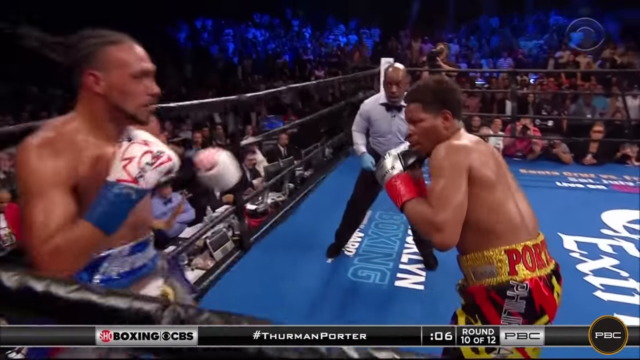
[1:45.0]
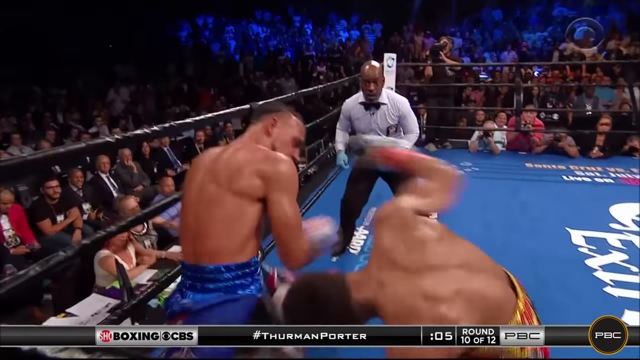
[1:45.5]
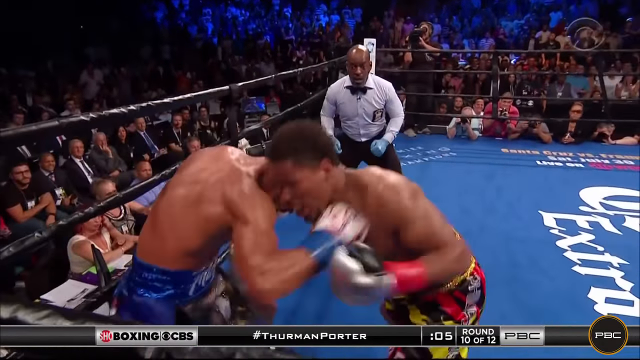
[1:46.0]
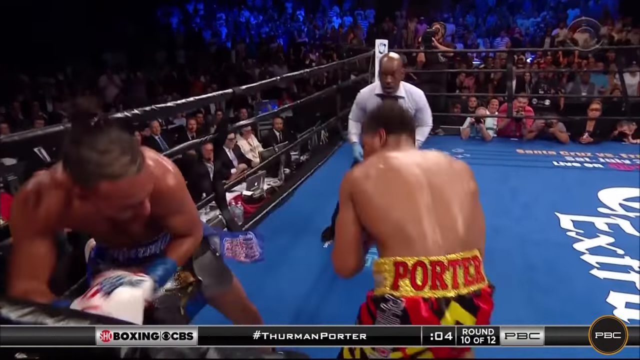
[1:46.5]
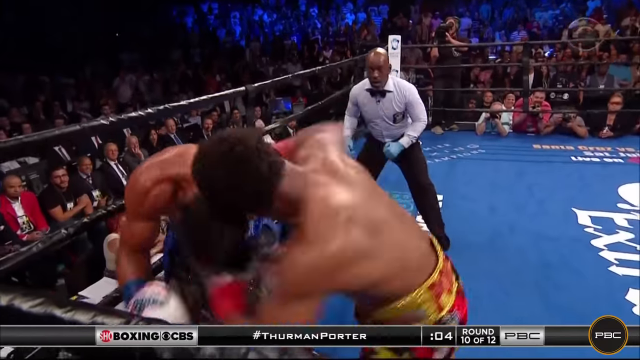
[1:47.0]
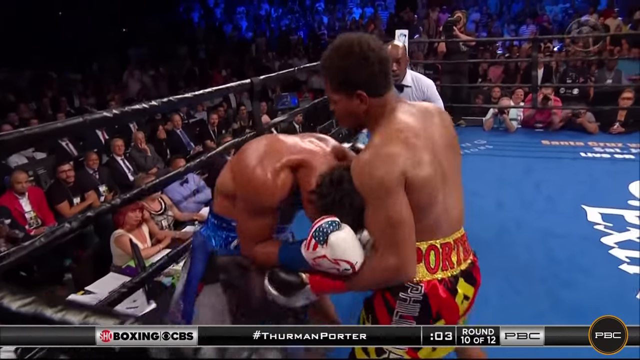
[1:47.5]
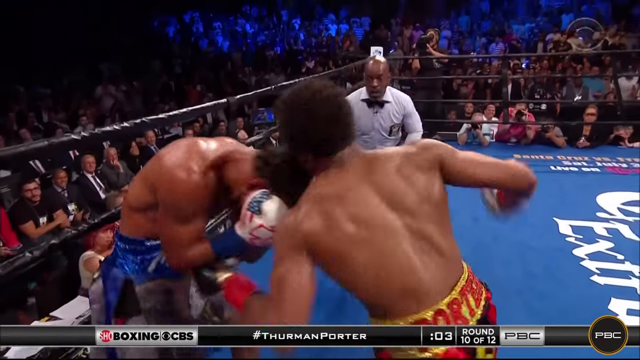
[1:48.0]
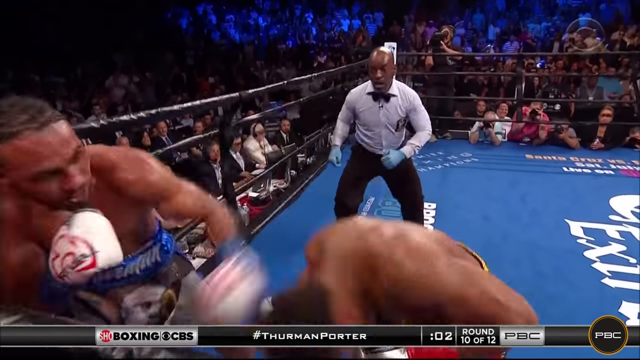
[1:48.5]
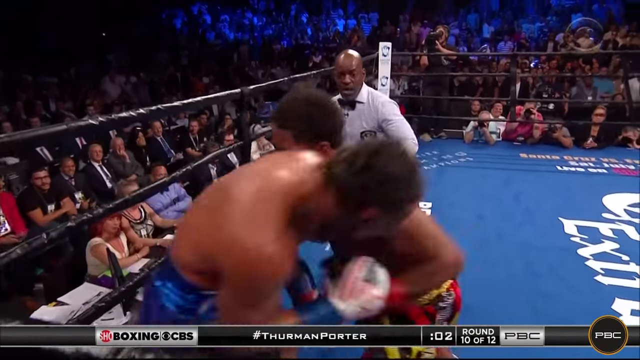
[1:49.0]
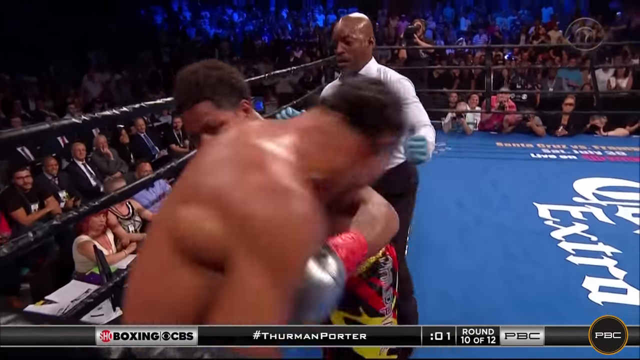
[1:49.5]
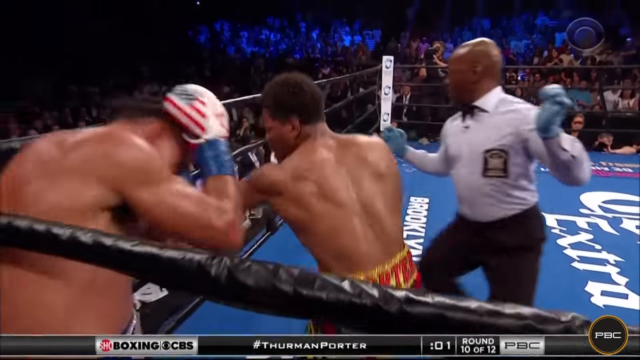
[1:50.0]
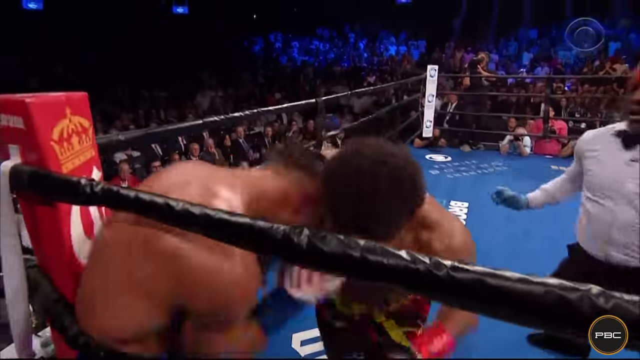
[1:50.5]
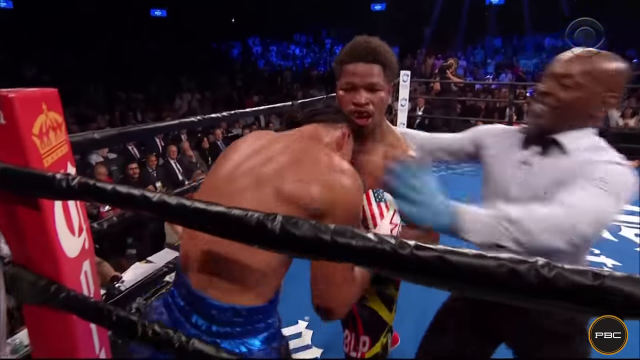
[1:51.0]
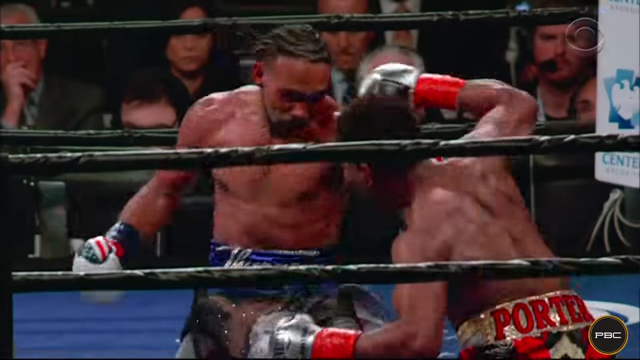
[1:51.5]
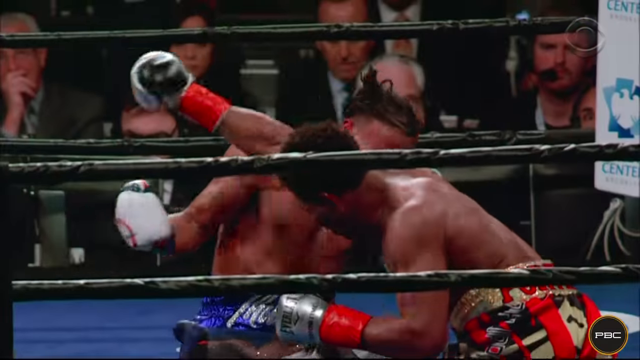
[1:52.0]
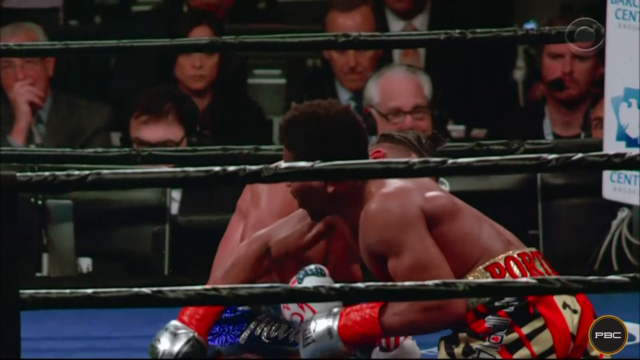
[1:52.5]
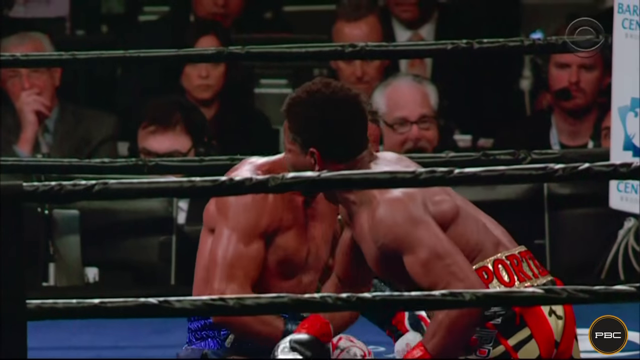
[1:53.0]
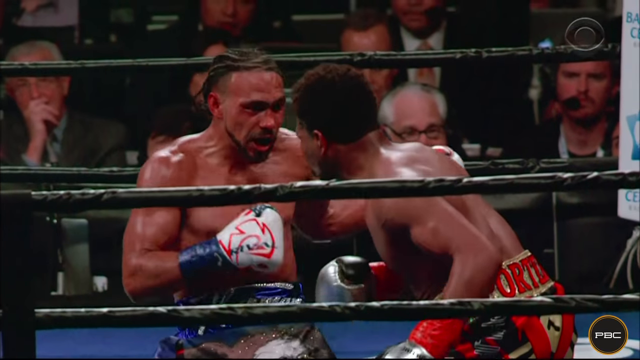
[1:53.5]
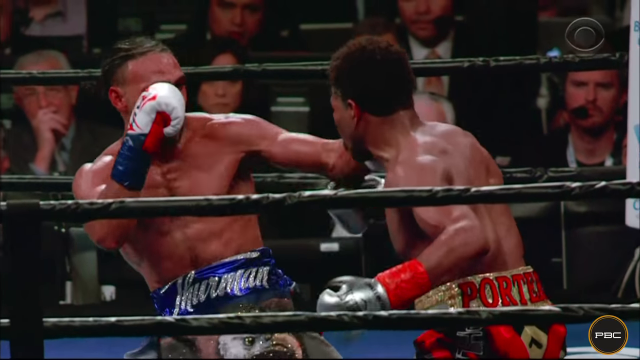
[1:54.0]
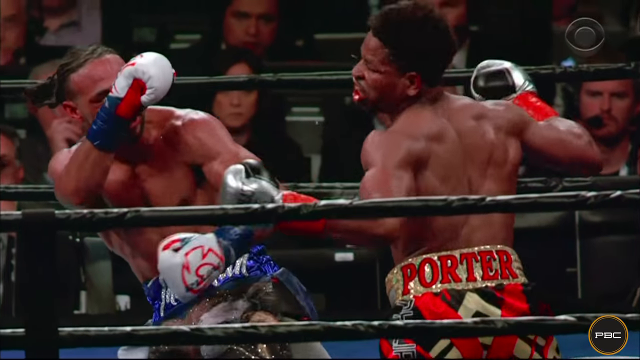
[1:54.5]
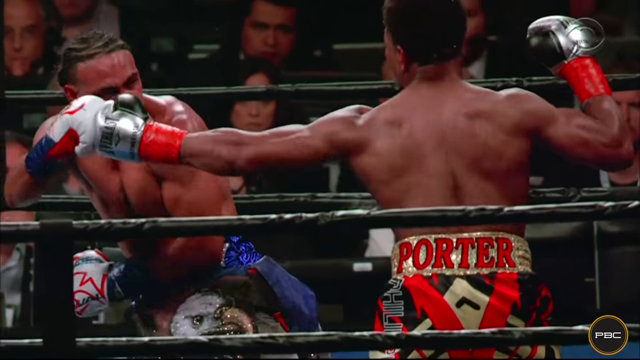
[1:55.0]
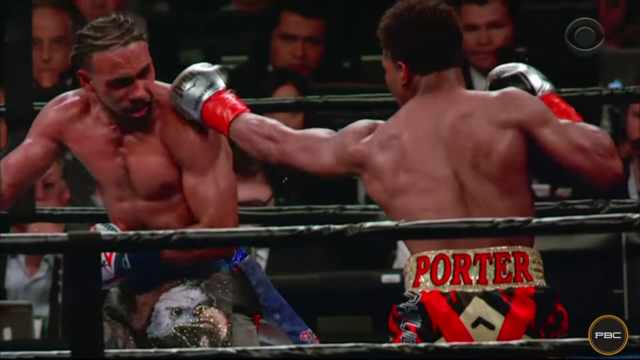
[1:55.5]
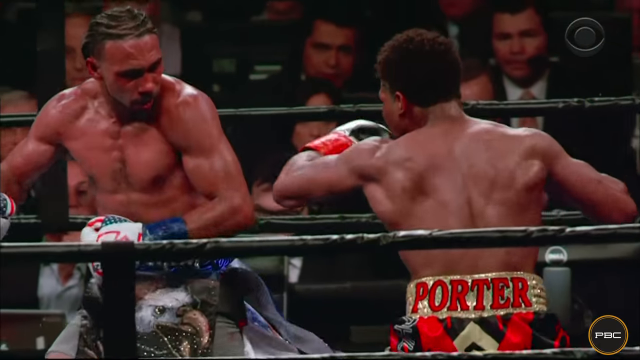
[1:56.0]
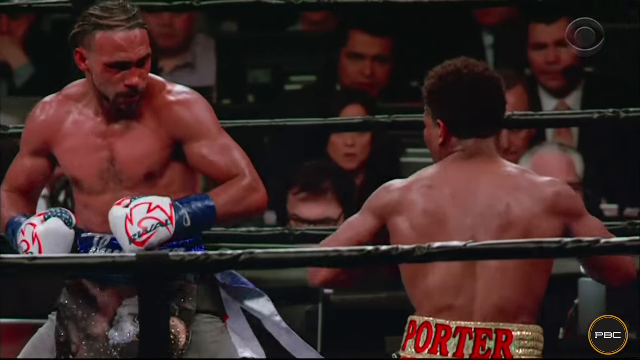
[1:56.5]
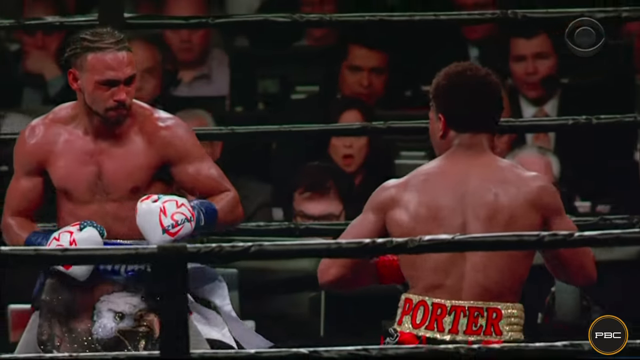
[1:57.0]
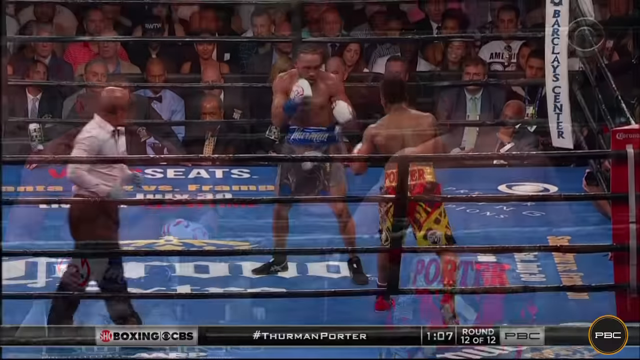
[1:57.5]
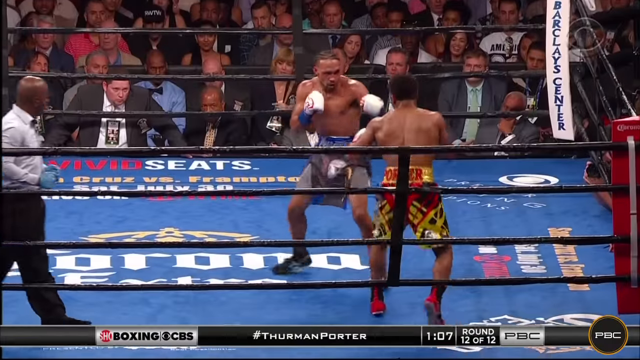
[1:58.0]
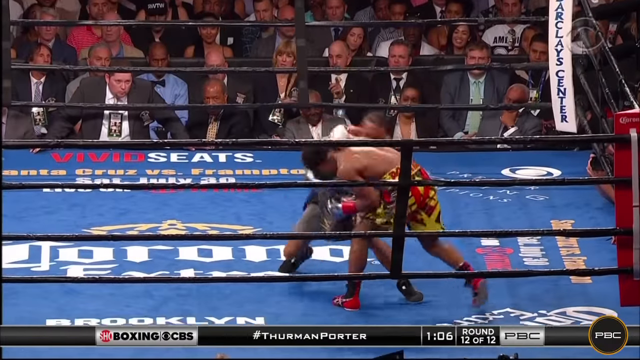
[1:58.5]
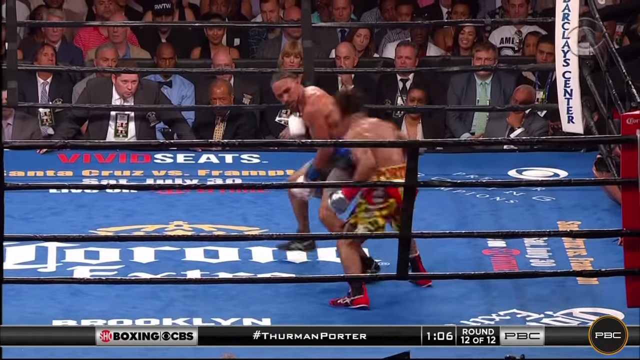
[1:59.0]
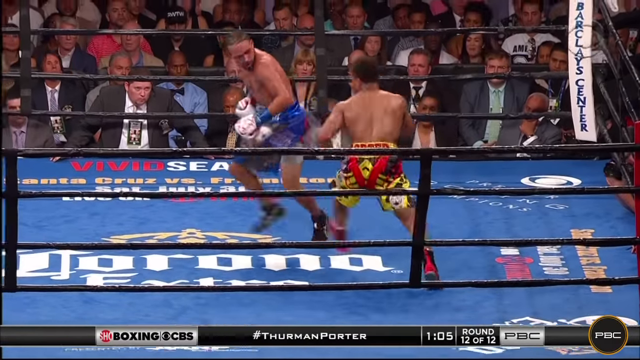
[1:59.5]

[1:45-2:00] The boxer in blue shorts is in the corner while the boxer in yellow, red, and black shorts throws wild punches at him. The boxer in blue shorts bends down to evade some of them, and the boxer in yellow and black shorts continues to wail on him with very large, powerful punches that appear to cause much damage. The video then cuts away to what appear to be highlights or other clips from the fight, shown in slow motion: Porter is seen from his back with the boxer in blue shorts facing him, and the boxer in blue shorts hits him with a large right that appears to cause good damage. The graphic at the bottom right shows round 12 of 12 for "#ThurmanPorter".